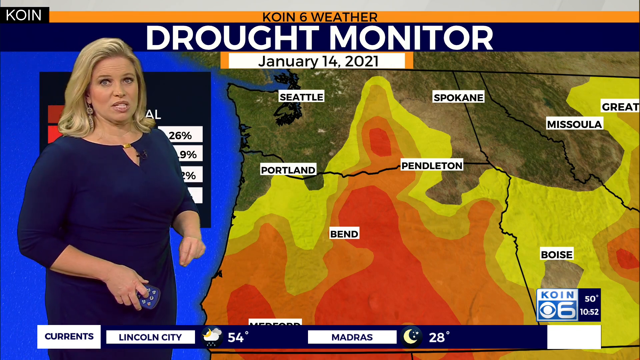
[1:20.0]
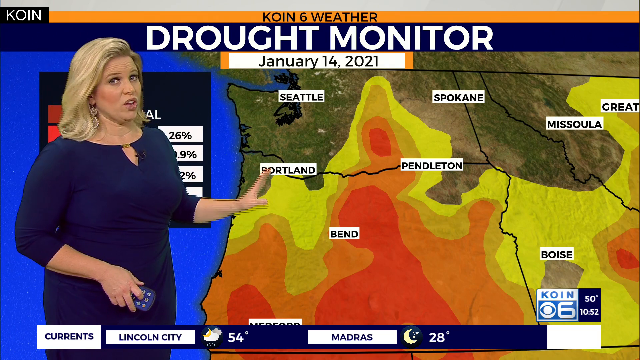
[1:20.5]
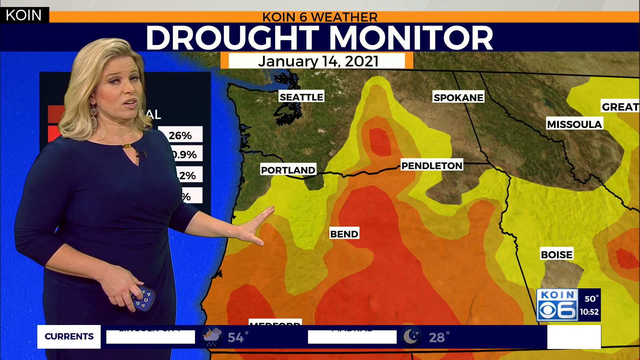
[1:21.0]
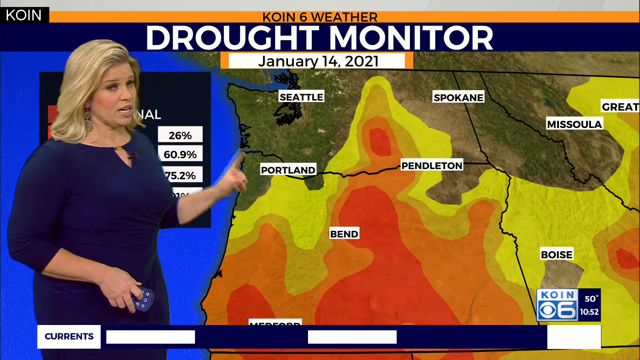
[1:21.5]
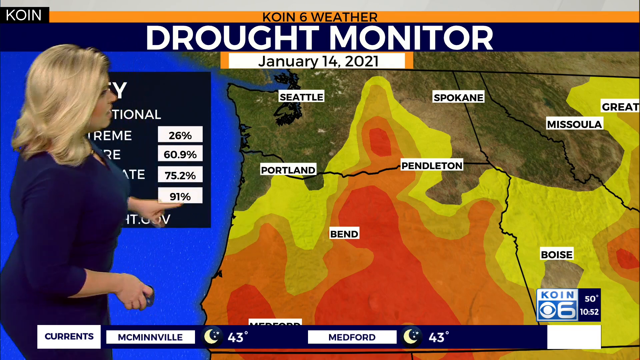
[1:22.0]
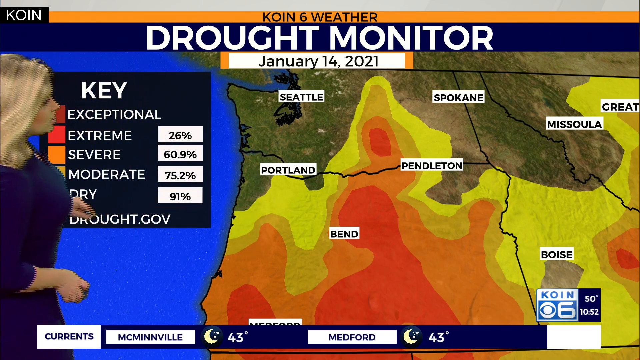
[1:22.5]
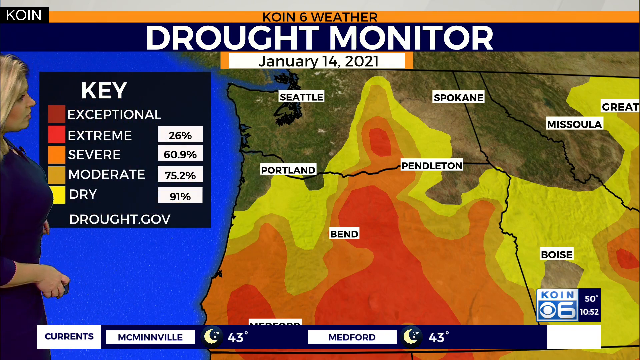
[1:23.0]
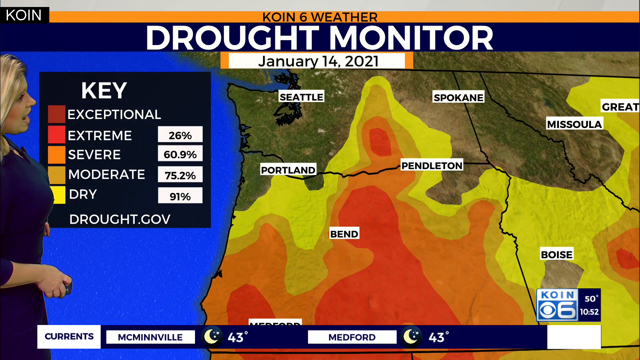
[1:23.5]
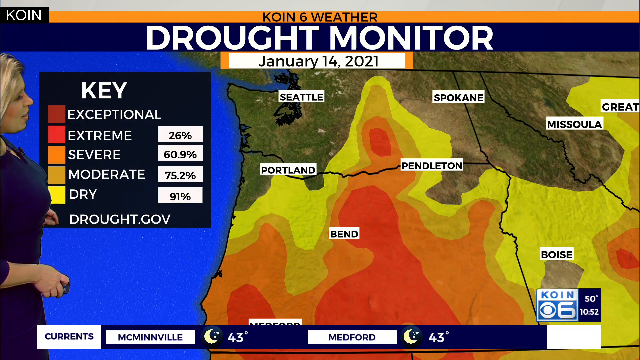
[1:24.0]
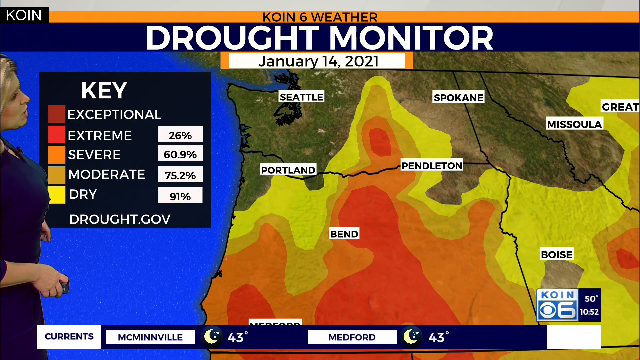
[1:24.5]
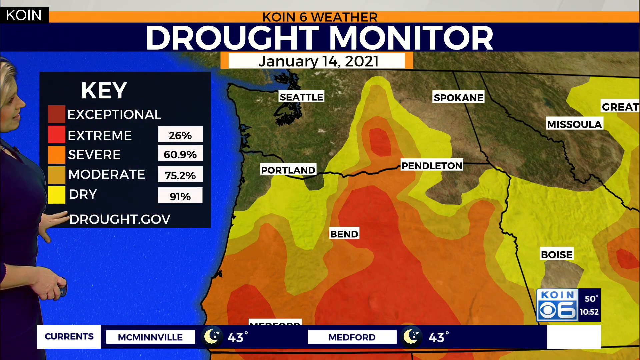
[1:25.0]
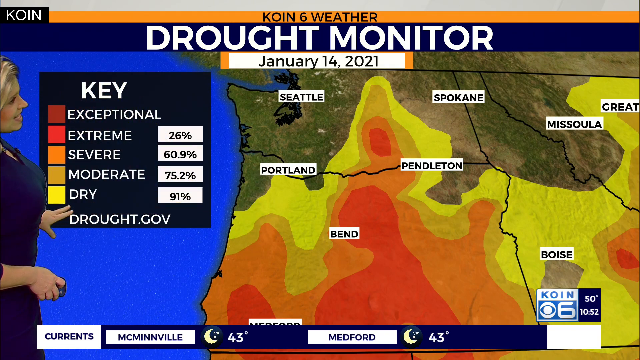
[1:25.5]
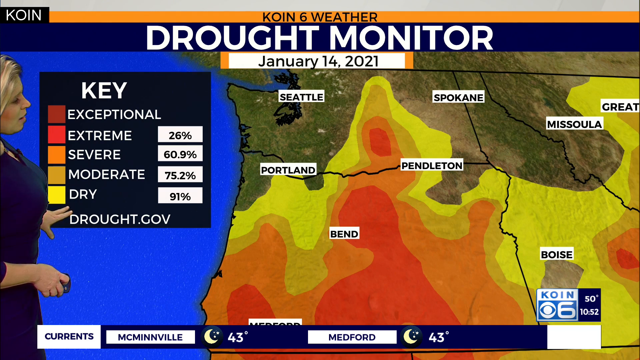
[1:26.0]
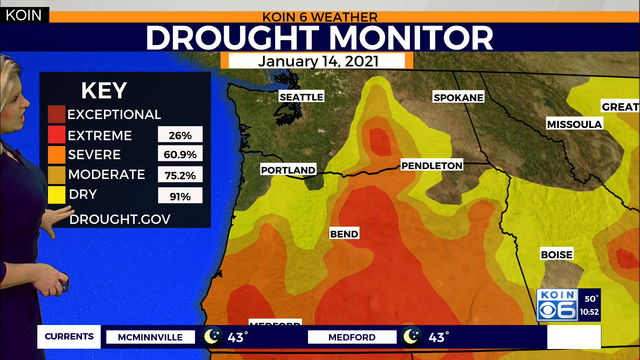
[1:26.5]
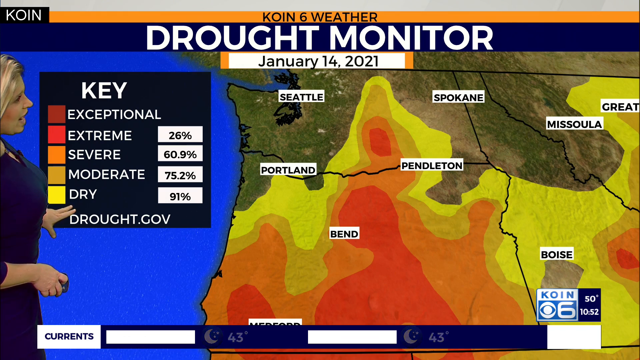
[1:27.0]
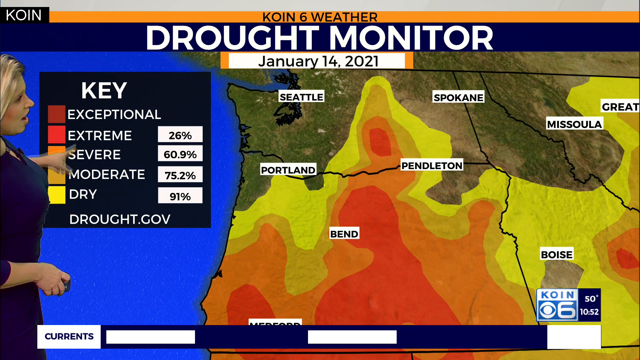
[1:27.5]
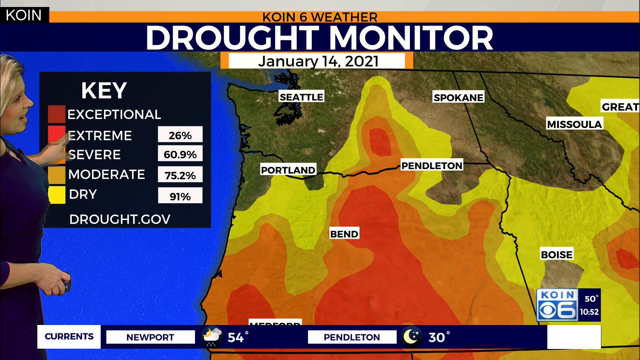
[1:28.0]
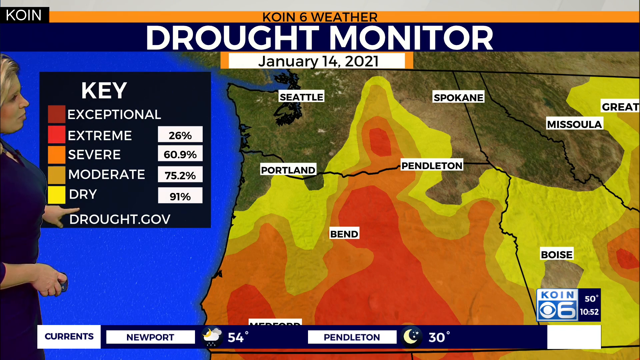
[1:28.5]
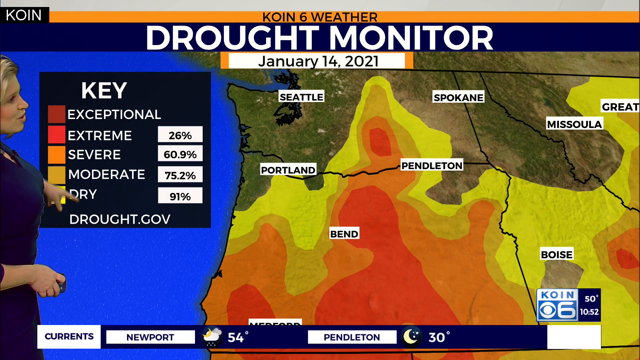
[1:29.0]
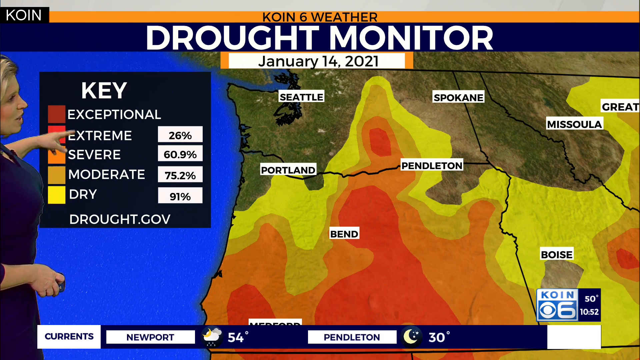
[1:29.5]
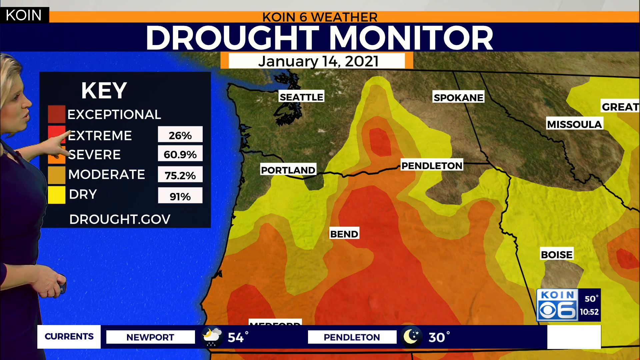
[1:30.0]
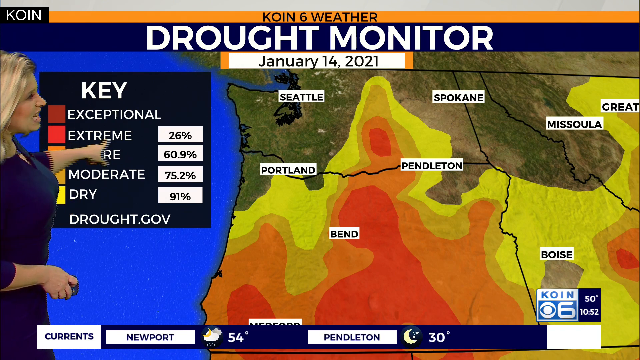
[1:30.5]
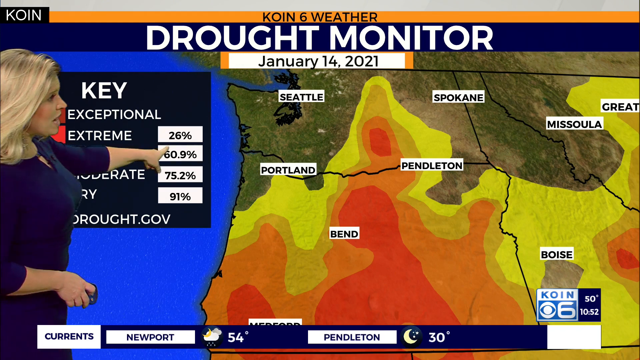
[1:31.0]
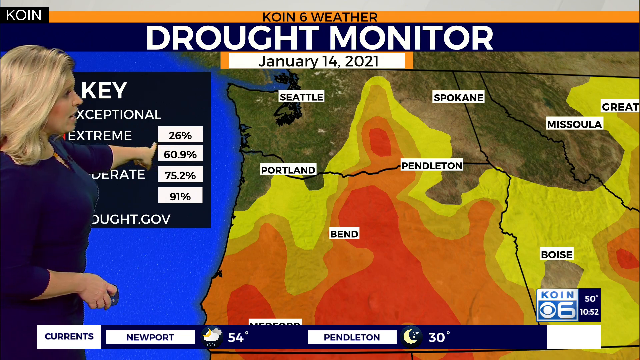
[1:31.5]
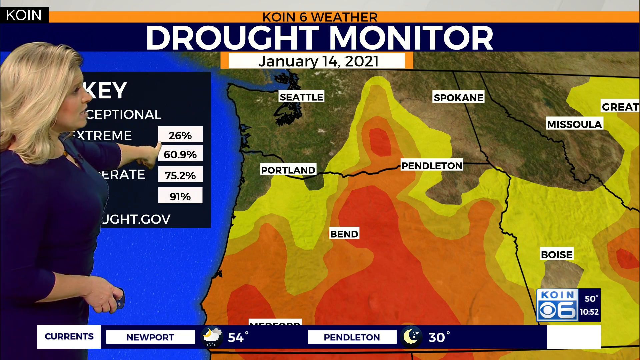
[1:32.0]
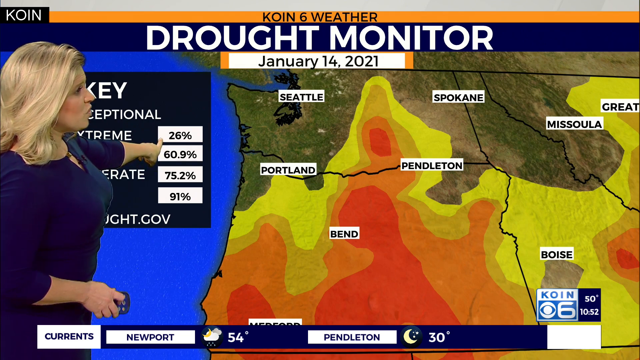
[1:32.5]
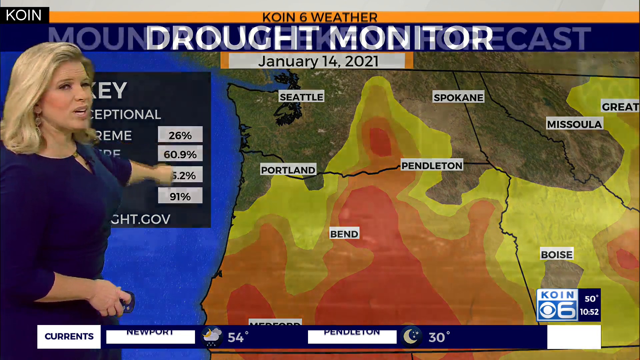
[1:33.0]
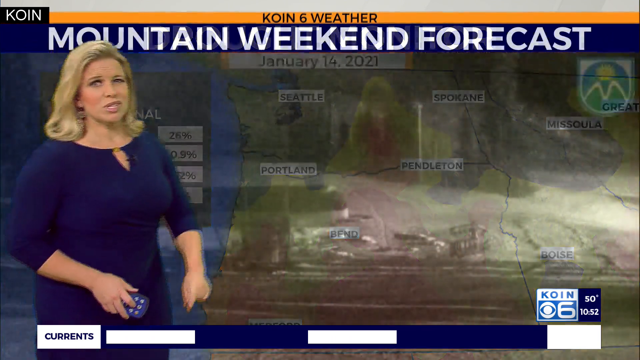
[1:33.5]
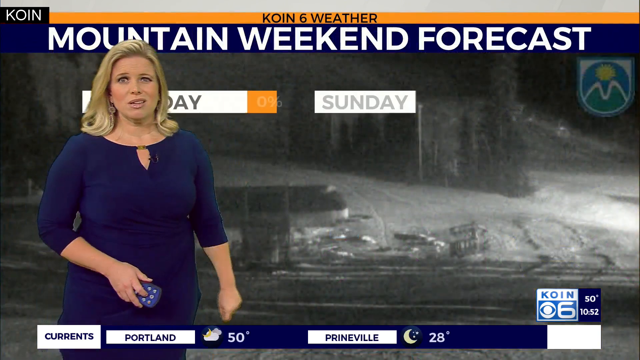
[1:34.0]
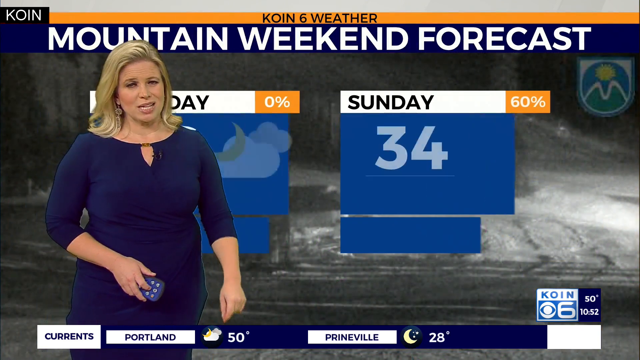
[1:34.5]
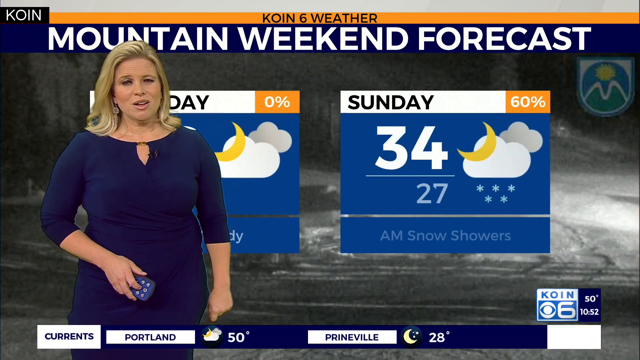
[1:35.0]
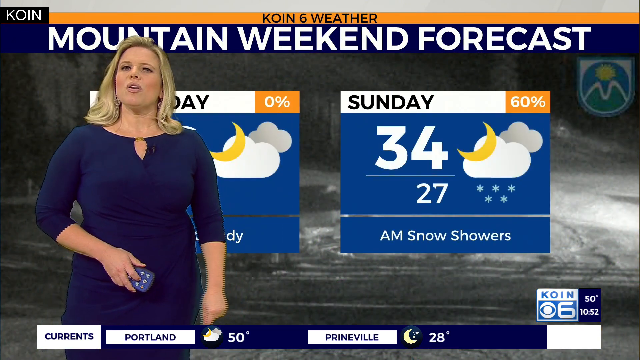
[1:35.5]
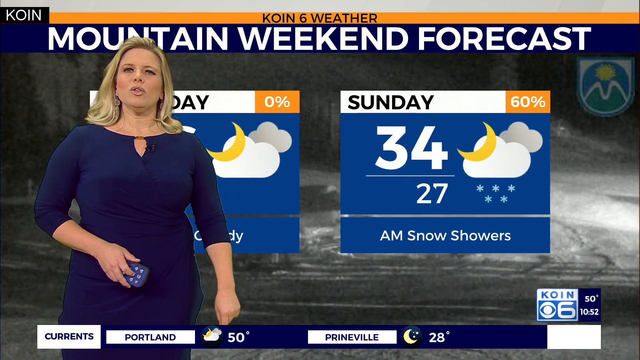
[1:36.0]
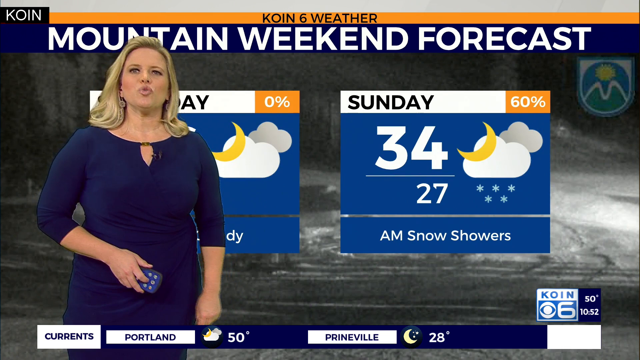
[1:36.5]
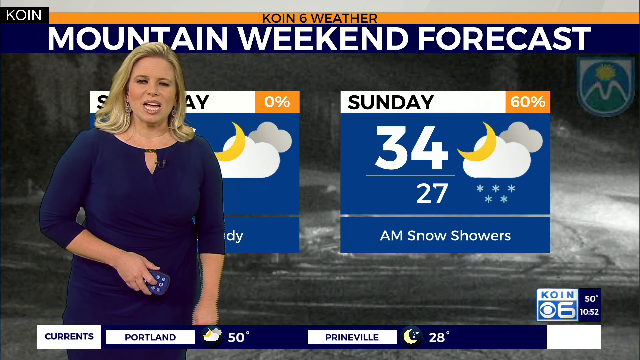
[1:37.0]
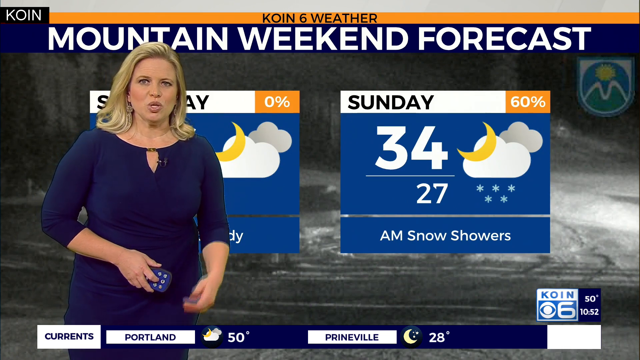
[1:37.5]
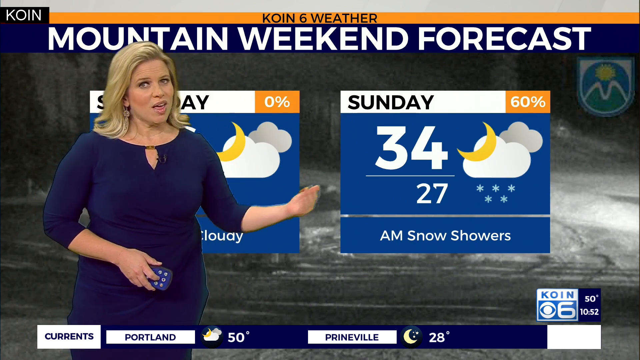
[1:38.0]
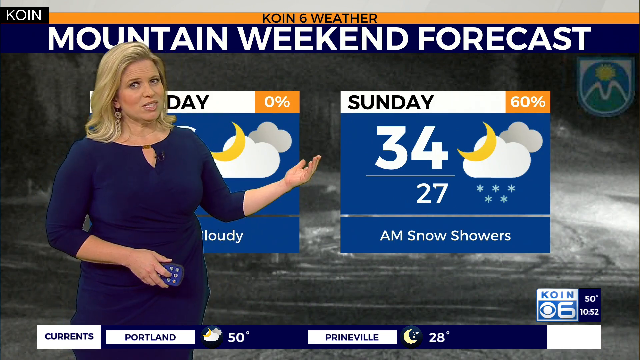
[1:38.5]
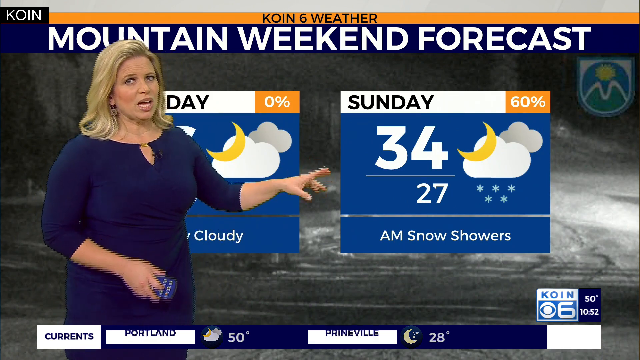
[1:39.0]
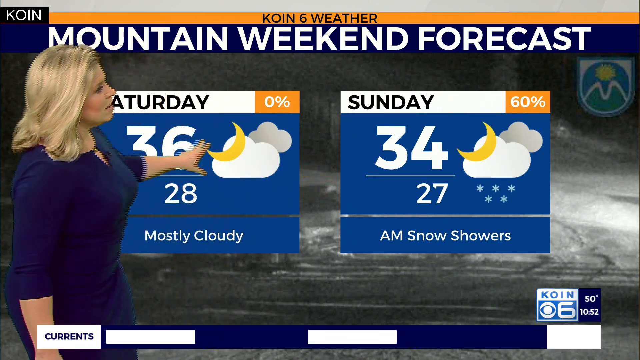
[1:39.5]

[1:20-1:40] A drought monitor for January 14th, 2021 appears behind the weather presenter, with key information given in percentages: extreme 26%, severe 60.9%, moderate 75.2% and dry 91%. Map colors are shown on the weather map behind her.